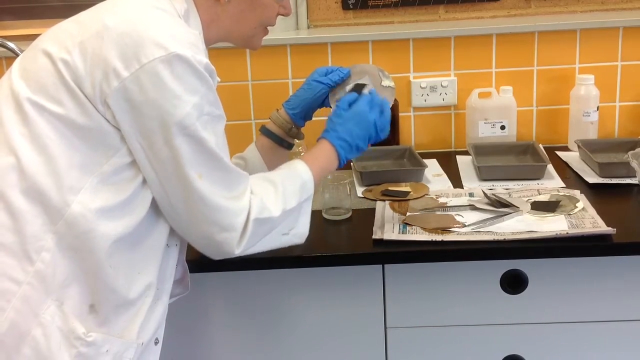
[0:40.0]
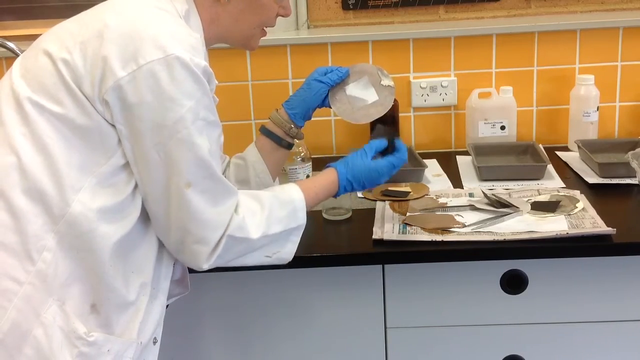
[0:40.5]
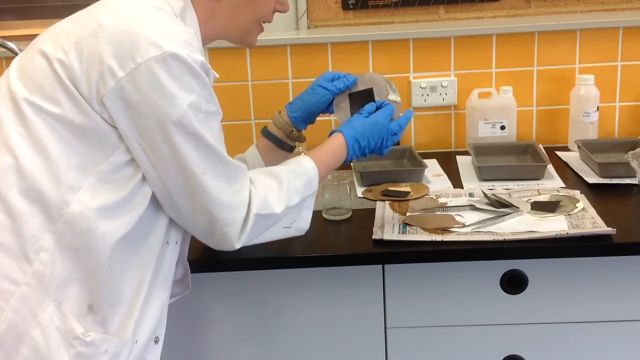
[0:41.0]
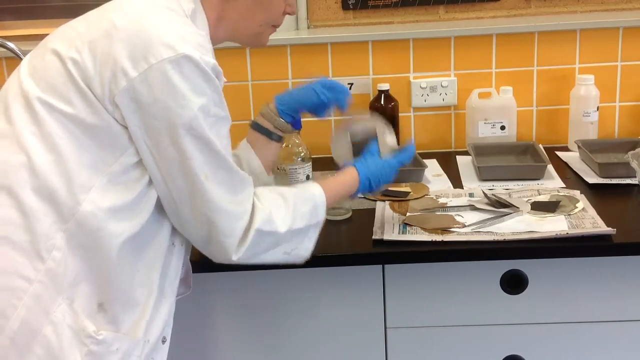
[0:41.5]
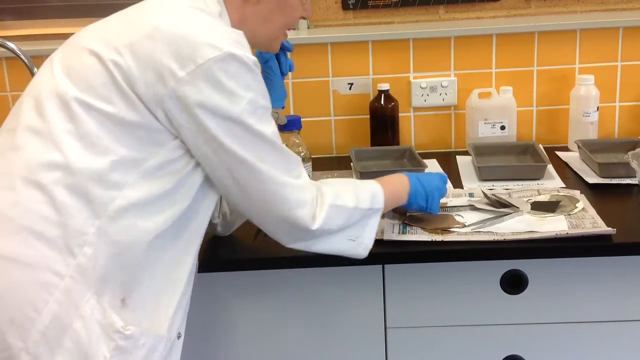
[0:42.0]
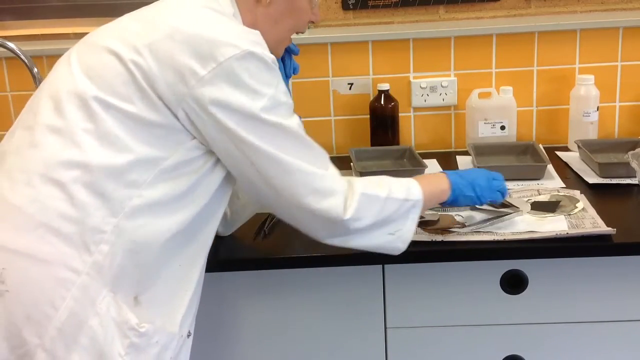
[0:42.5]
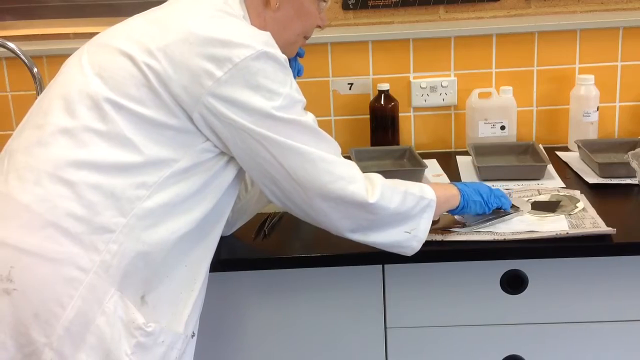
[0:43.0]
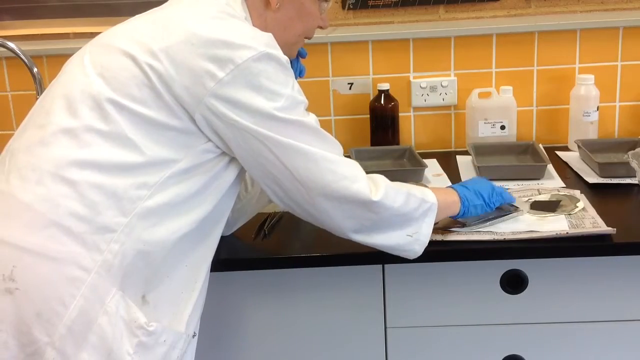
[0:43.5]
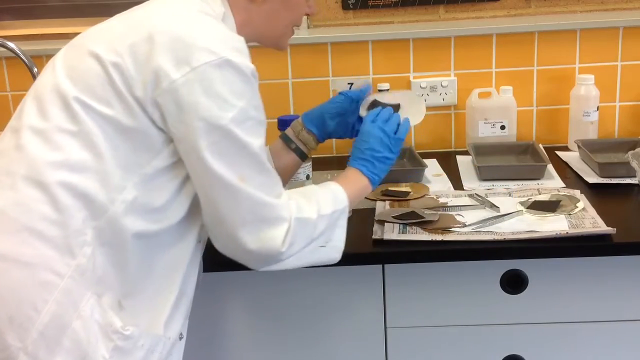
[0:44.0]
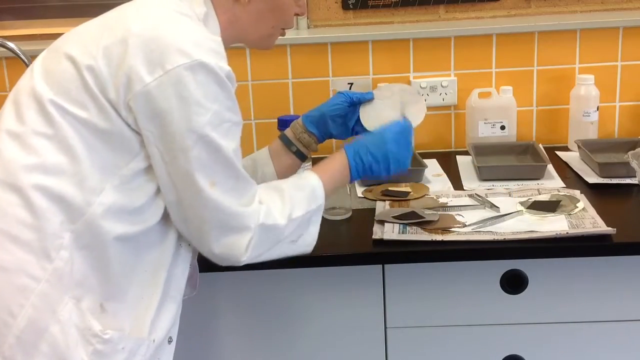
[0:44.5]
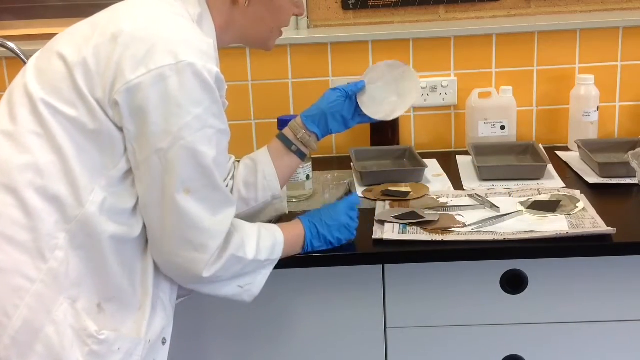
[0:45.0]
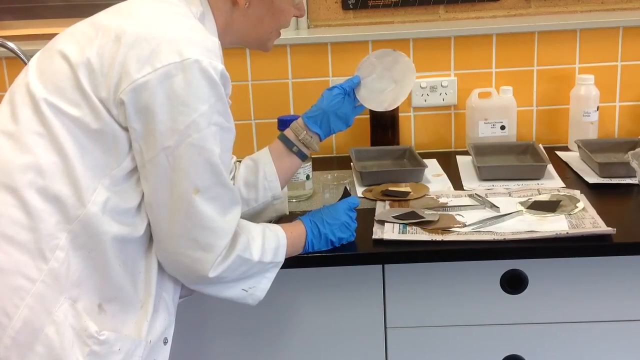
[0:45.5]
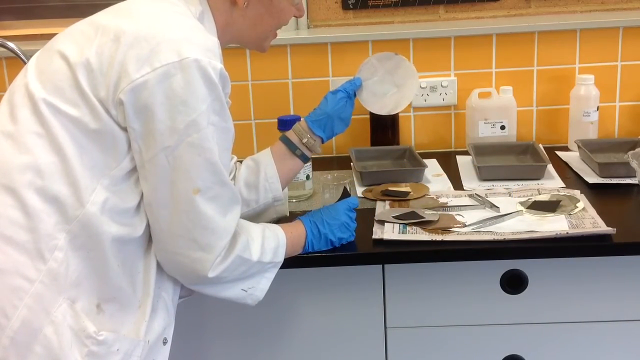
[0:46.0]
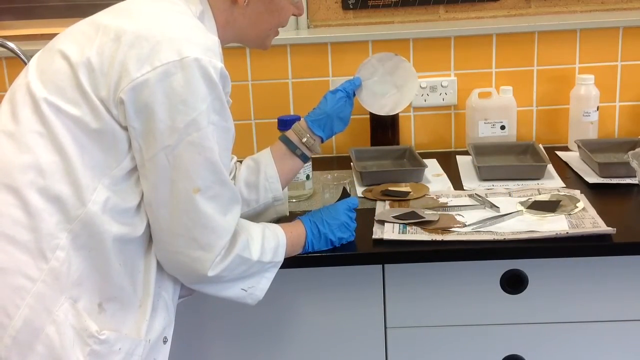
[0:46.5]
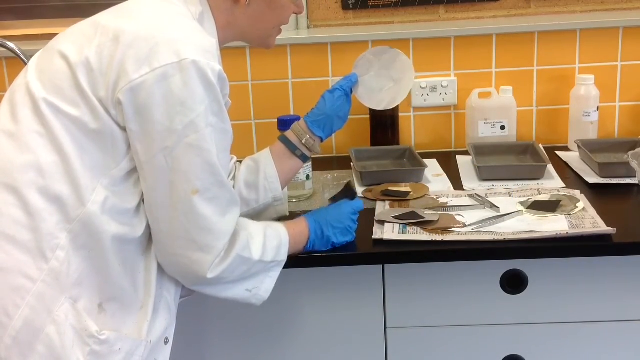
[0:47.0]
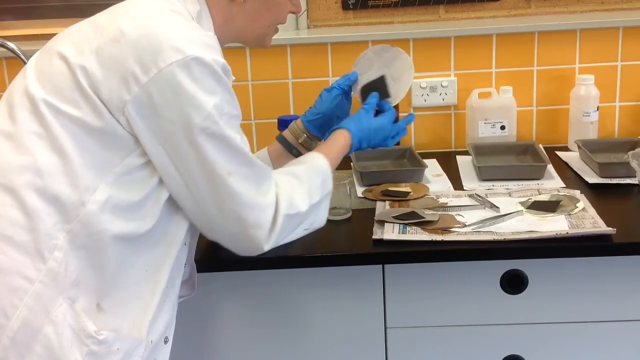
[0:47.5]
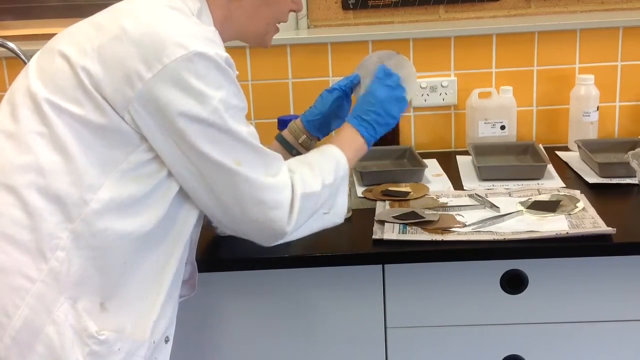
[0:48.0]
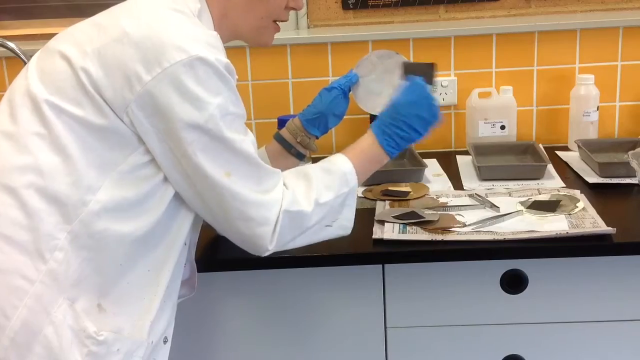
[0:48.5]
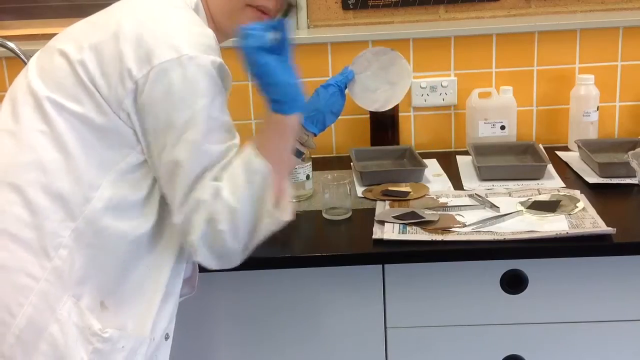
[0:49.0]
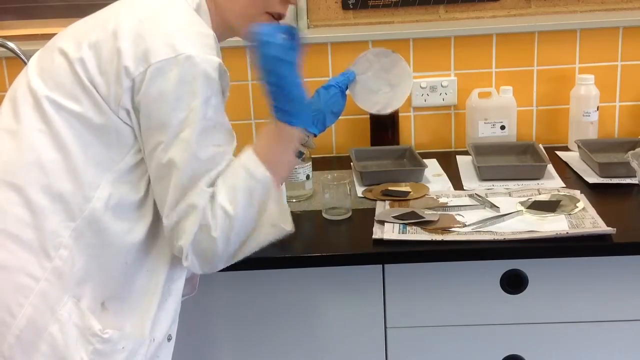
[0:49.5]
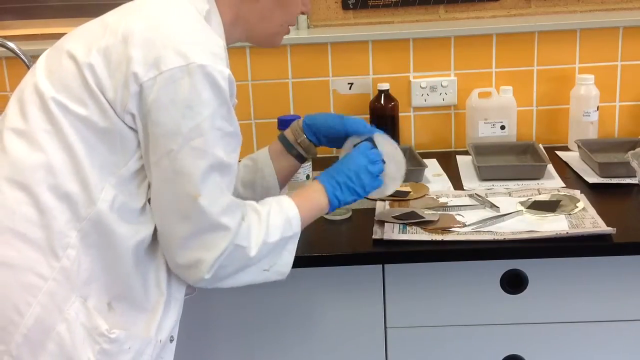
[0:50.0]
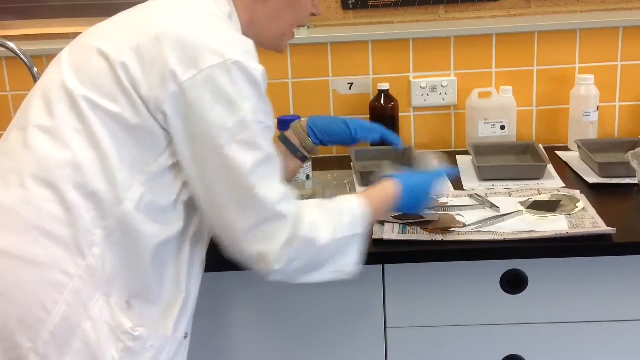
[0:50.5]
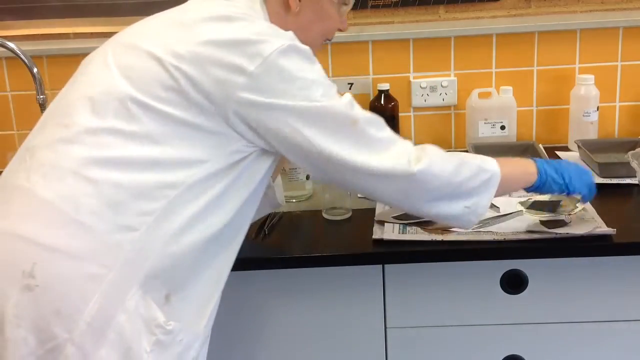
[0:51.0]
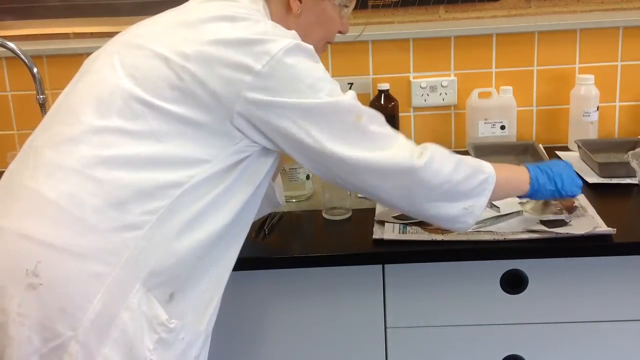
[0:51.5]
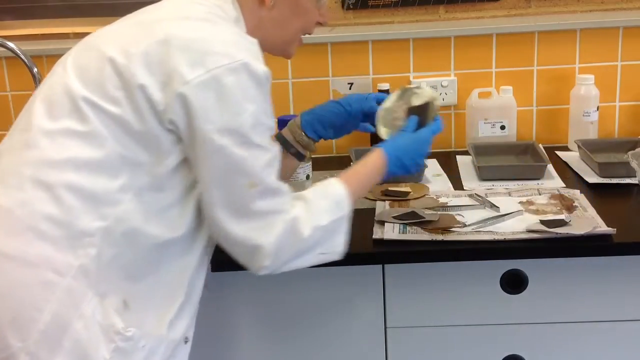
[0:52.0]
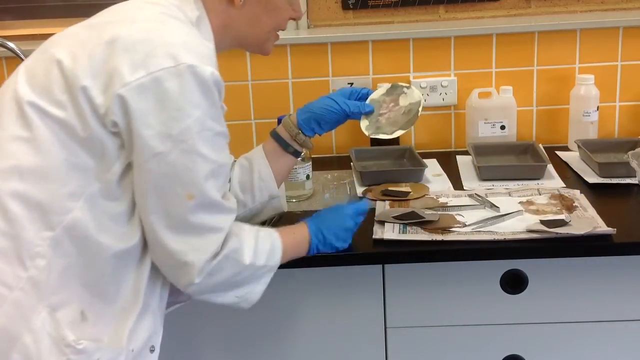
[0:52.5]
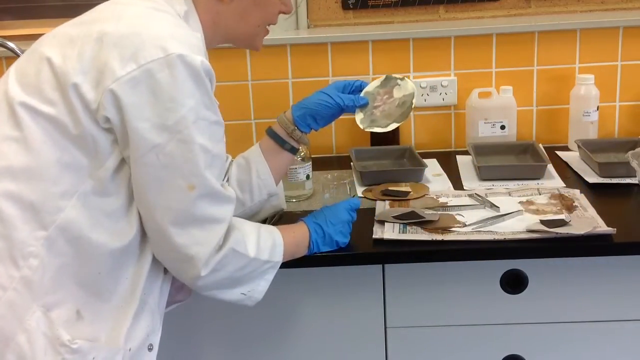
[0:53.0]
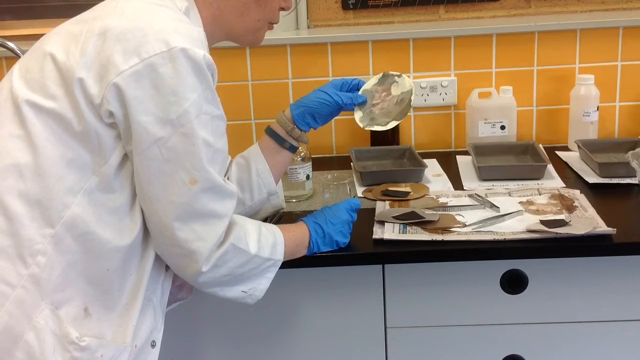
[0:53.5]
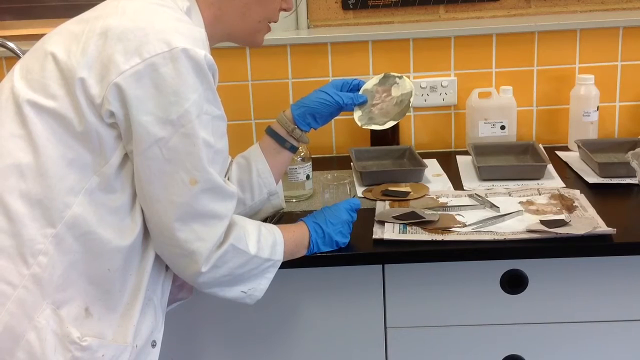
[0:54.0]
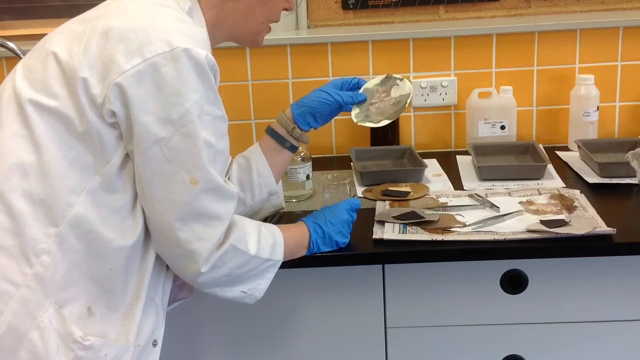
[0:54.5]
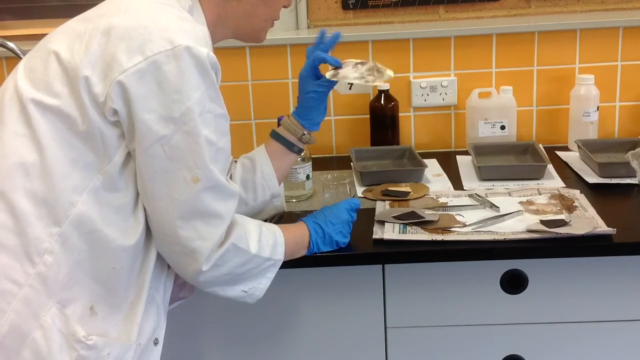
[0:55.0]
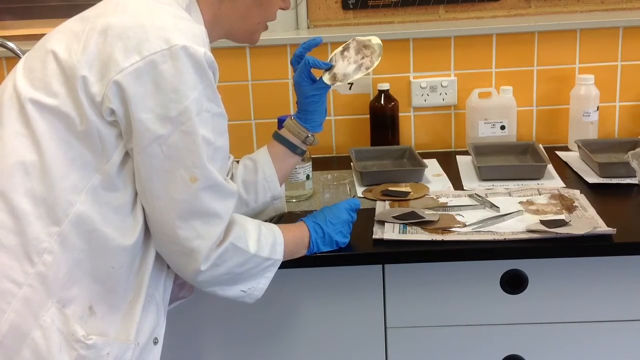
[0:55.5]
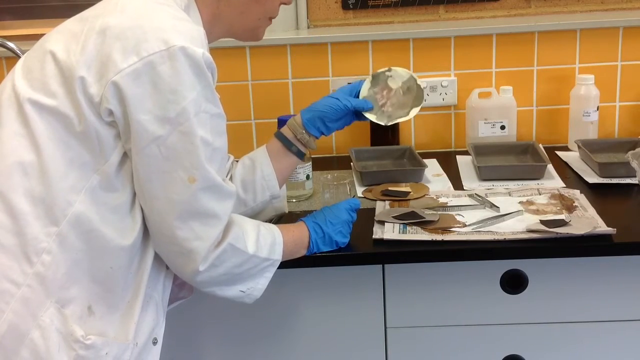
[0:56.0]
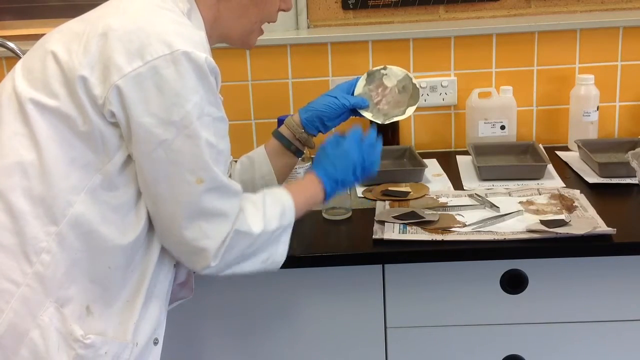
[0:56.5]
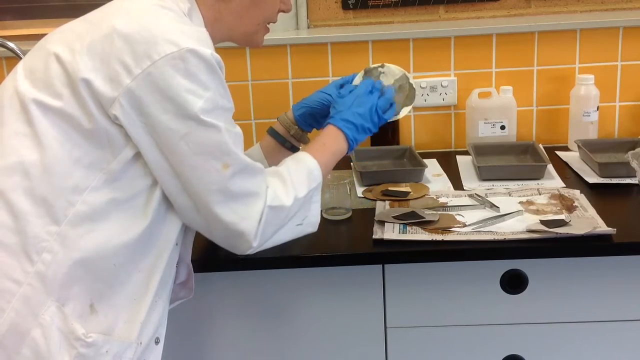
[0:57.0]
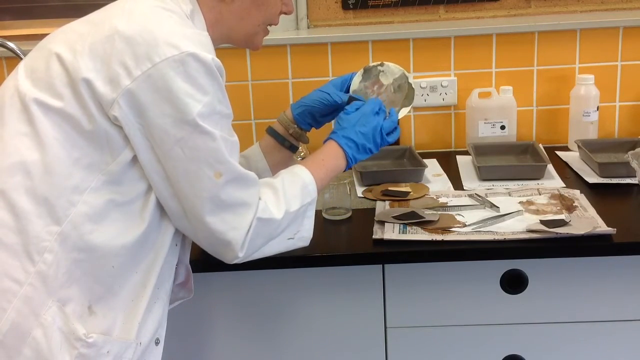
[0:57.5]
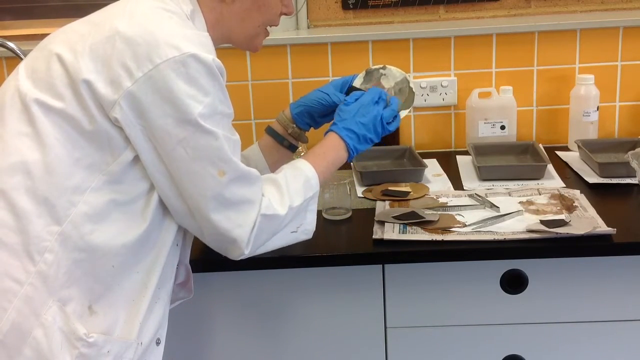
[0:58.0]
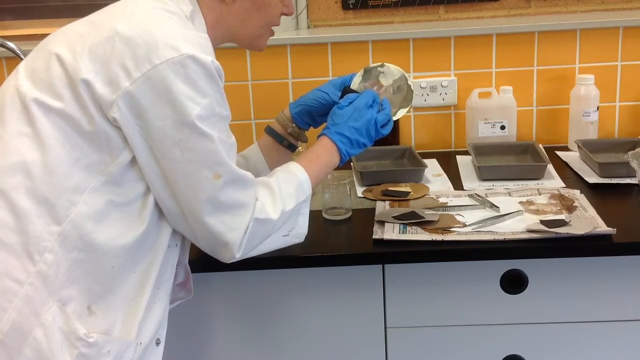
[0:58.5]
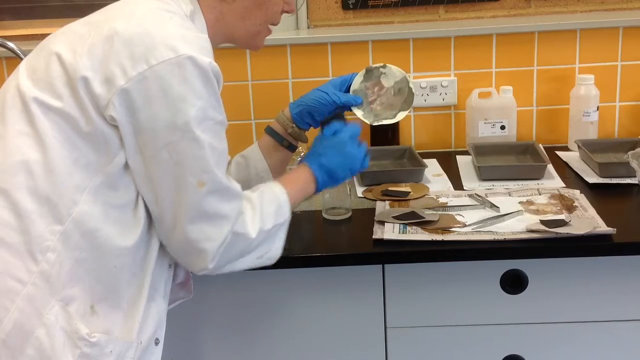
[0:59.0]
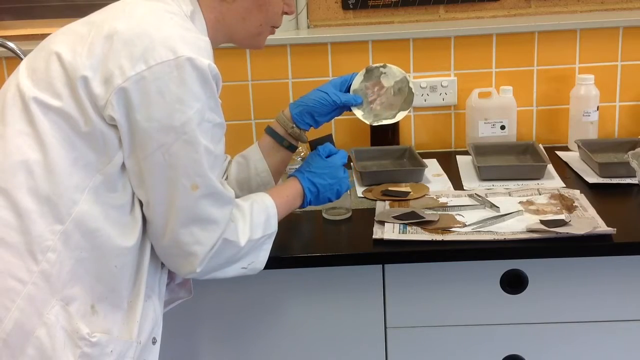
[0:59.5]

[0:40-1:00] A person in a white lab coat and blue gloves leans over a brown countertop with her left elbow resting on it. On the countertop are three gray cake pans. Behind the leftmost cake pan, which is in the middle of the screen, is a brown bottle; behind the cake pan to its right is a white plastic jug; and behind the next cake pan to the right is a white plastic bottle. She holds a circular piece of paper in her left hand and a square piece of paper in her right, sets them down, then picks up another circular piece of paper and another square object and compares them, talking as she does so. She picks up another circular piece of paper that looks like it has paint on it and rubs around the paint with her right middle finger. She has a wristwatch on her left wrist and a brown band on her left wrist, with the brown band further up her arm than the watch.